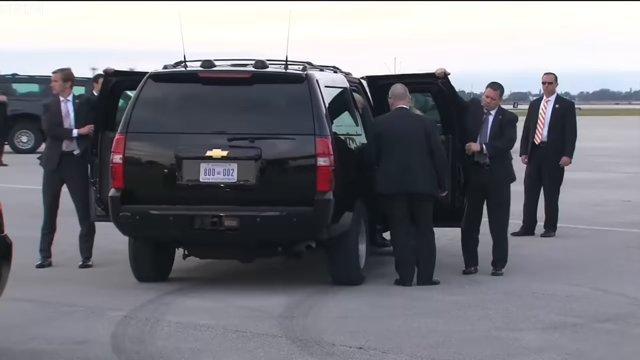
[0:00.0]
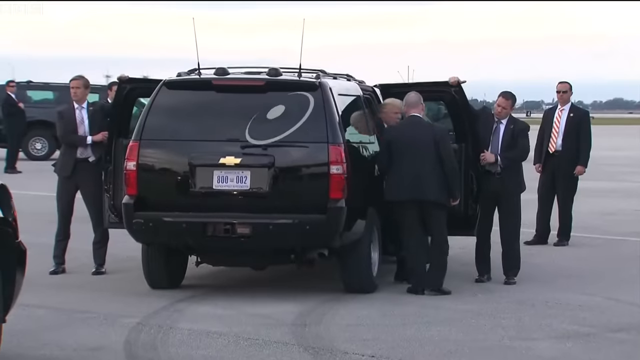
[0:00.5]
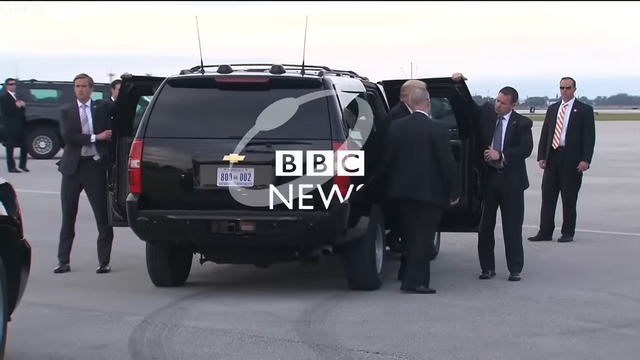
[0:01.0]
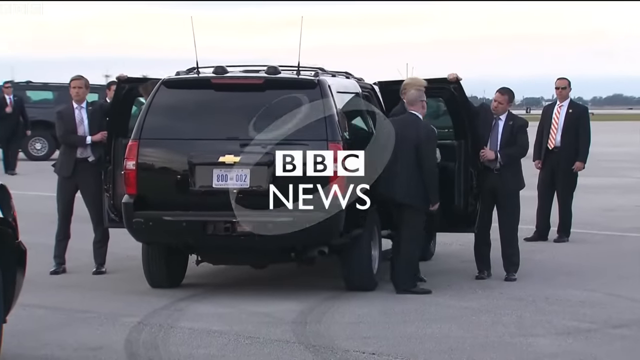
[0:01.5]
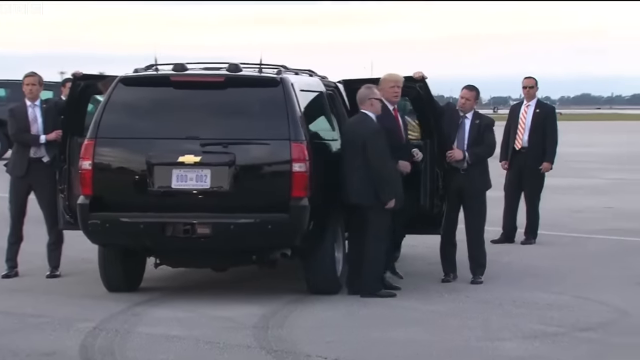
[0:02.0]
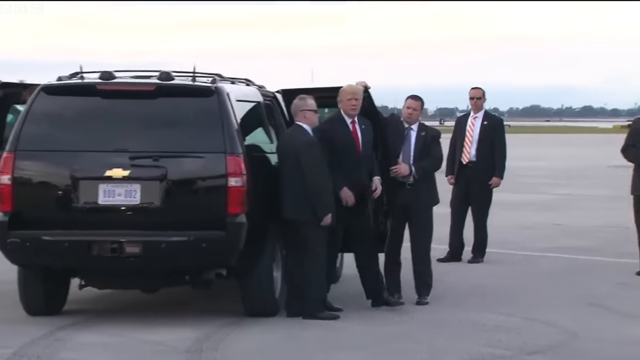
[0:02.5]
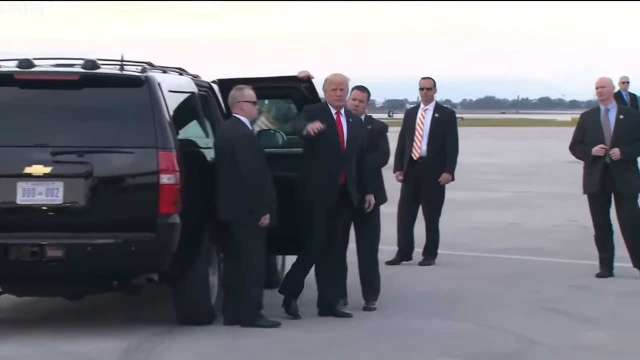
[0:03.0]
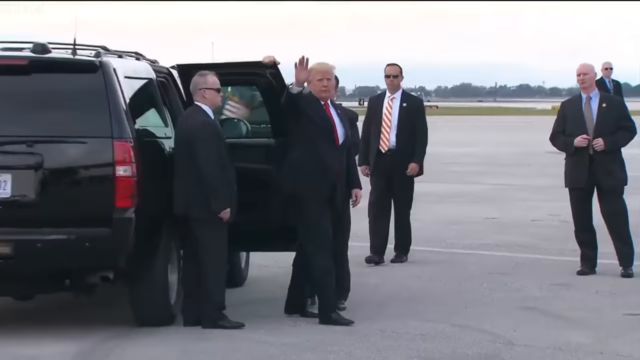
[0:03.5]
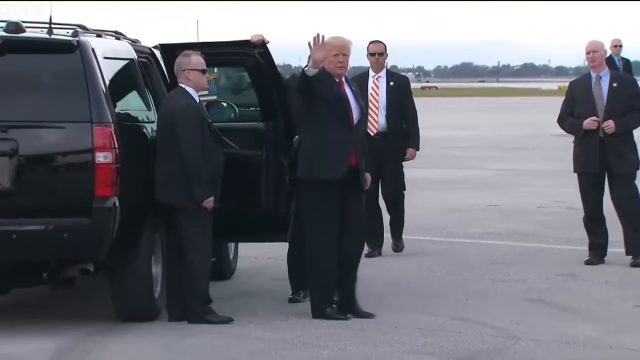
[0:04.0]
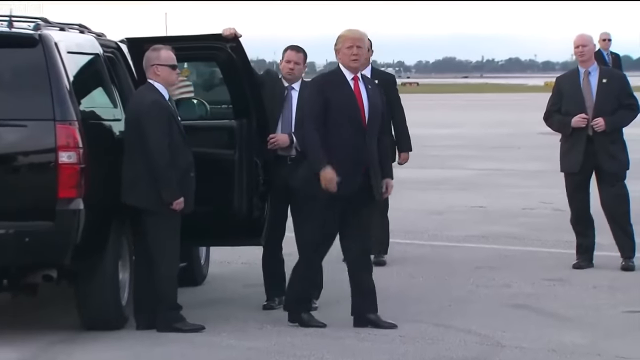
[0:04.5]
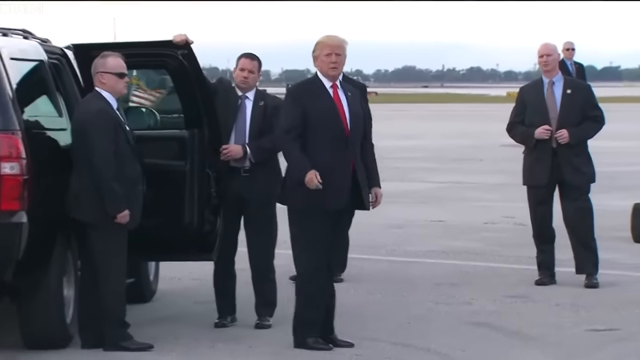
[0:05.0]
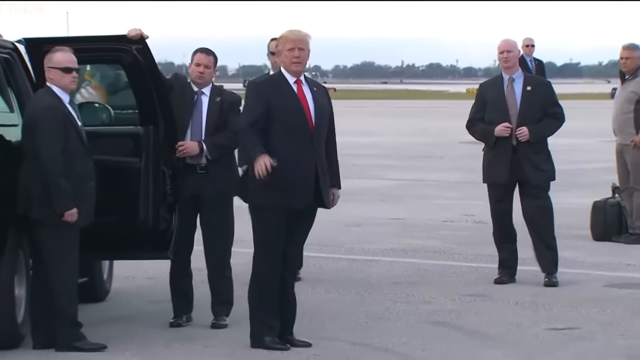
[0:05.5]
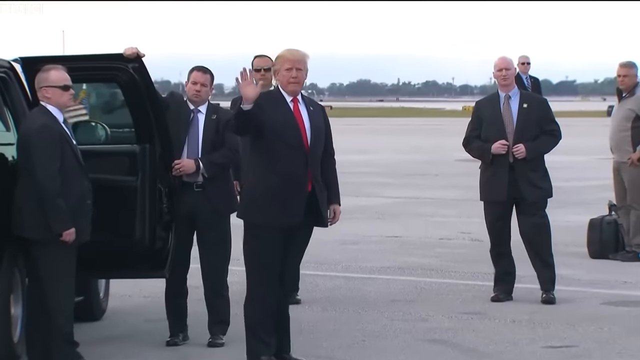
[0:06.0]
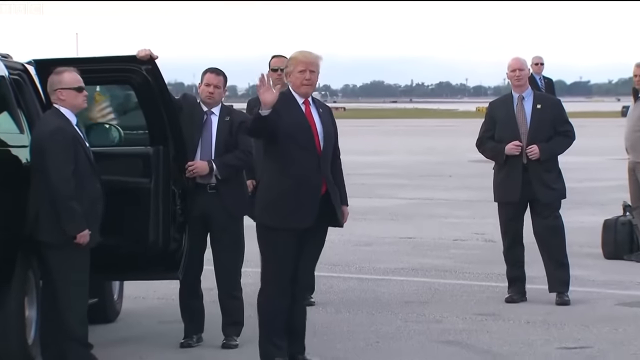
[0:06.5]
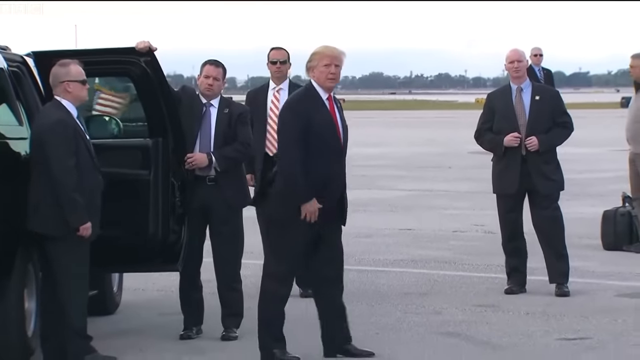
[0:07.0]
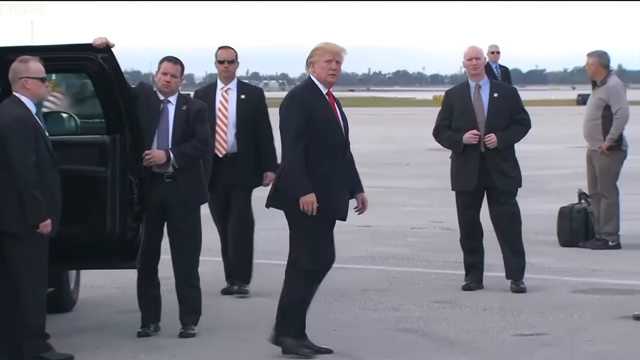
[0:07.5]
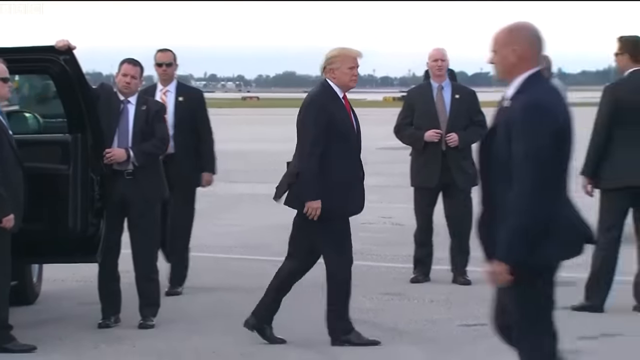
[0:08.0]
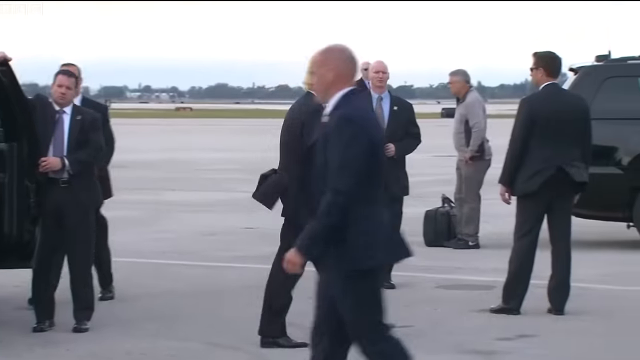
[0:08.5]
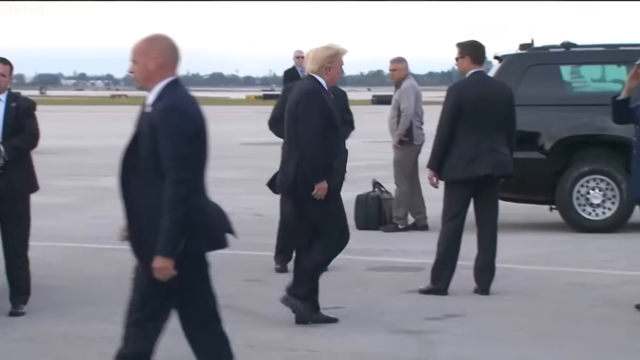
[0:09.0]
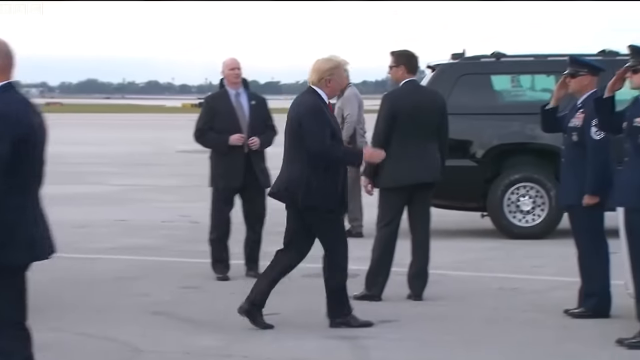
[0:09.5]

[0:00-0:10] A big government van, more like a heavy SUV than a pickup truck, is shown as Donald Trump gets off of it. Several men in suits wearing dark glasses surround him, apparently Secret Service security agents. He walks towards what seems to be a set of stairs for boarding an airplane. A splash screen reading "BBC News" appears very quickly in the middle of the screen. The sky is visible far in the back, along with parts of other ramps and other parts of the airport's tracks in the far background as he walks to the stairs.